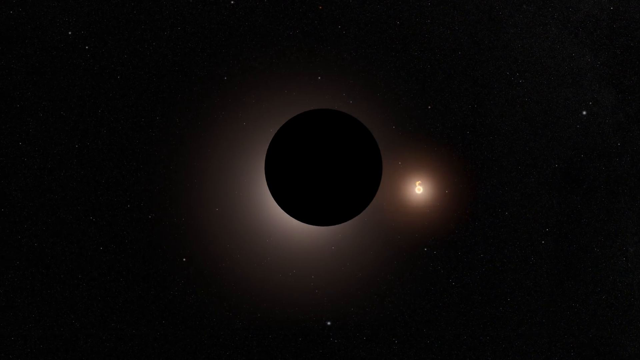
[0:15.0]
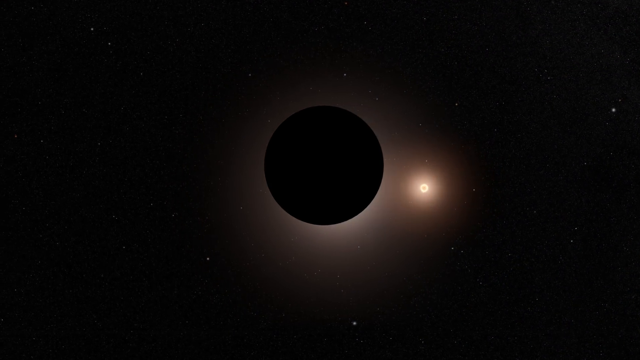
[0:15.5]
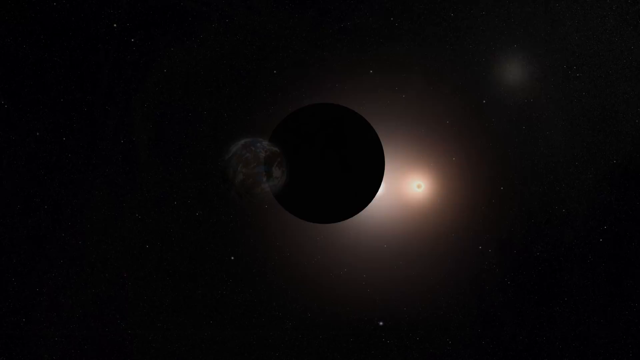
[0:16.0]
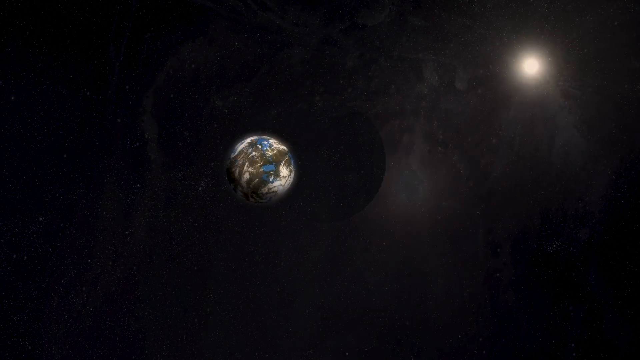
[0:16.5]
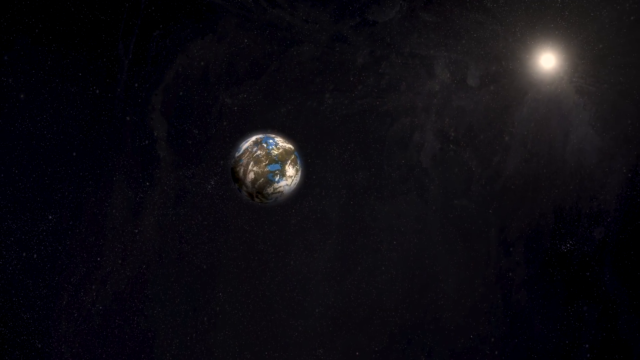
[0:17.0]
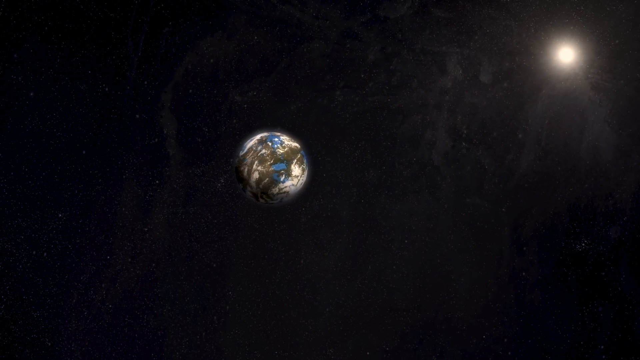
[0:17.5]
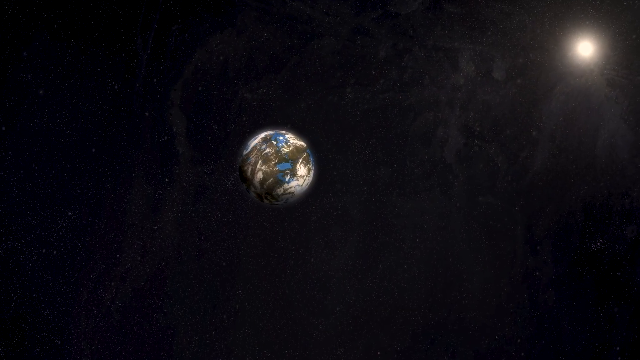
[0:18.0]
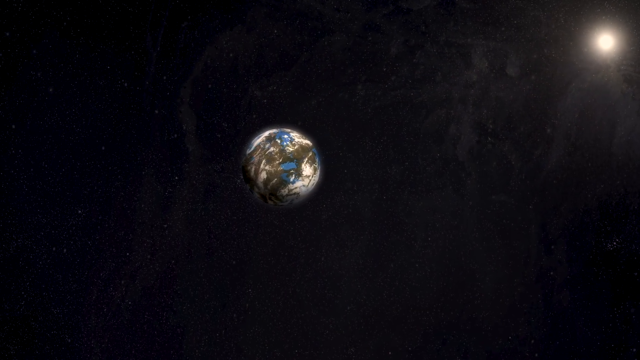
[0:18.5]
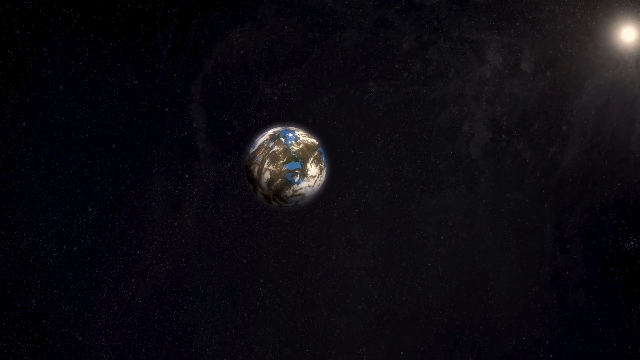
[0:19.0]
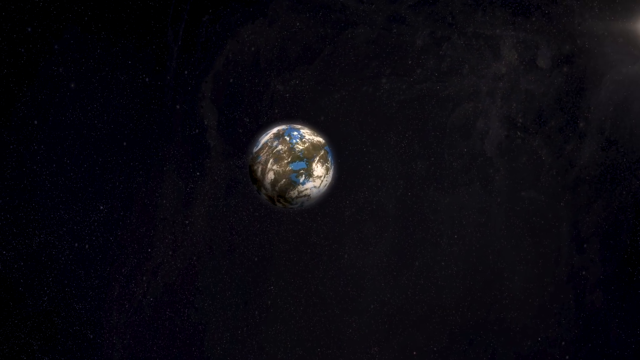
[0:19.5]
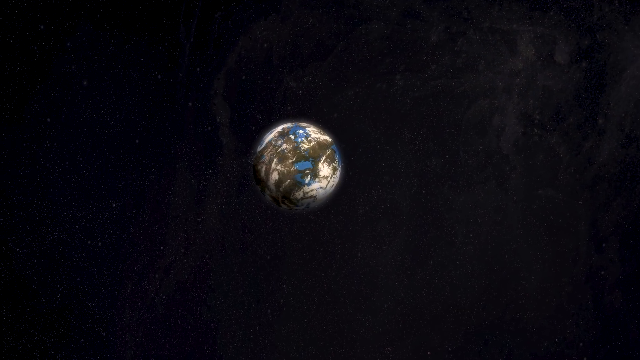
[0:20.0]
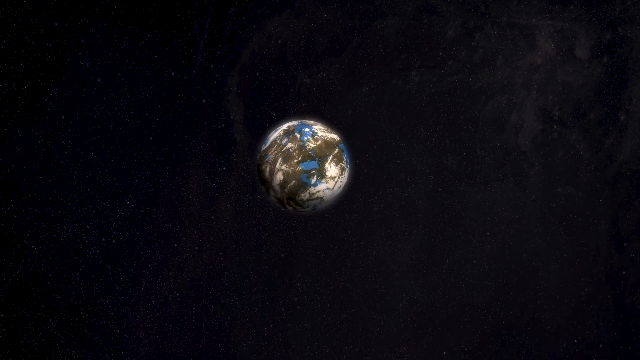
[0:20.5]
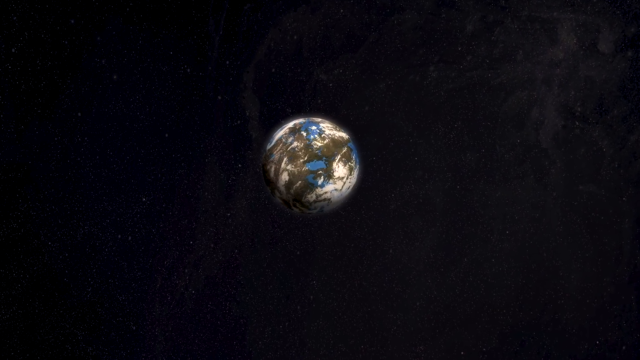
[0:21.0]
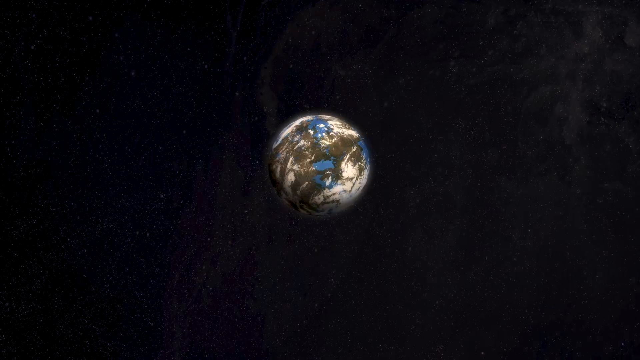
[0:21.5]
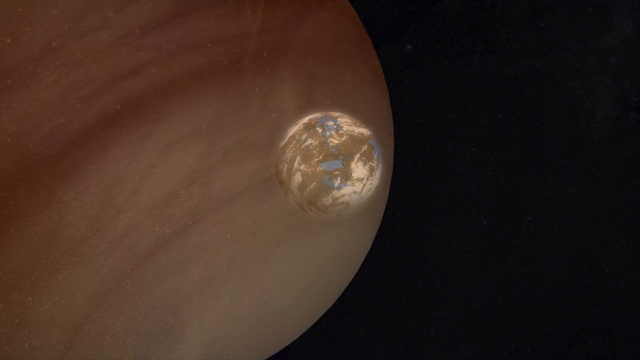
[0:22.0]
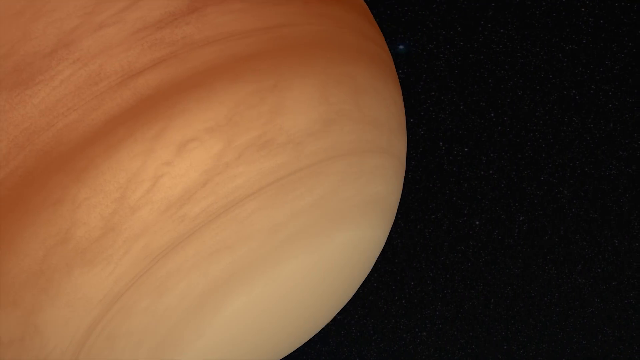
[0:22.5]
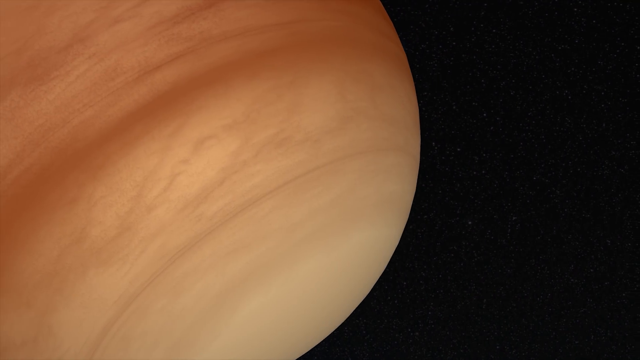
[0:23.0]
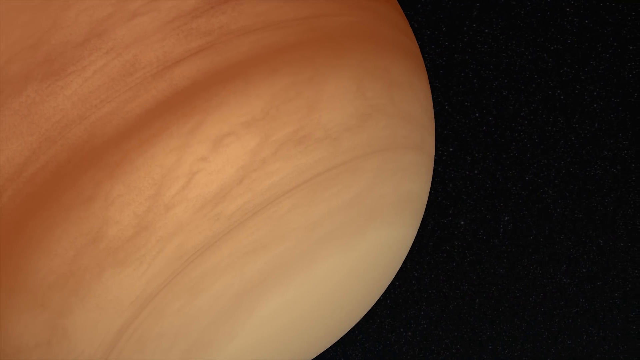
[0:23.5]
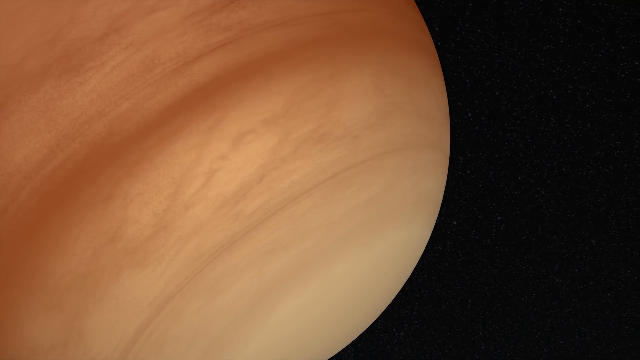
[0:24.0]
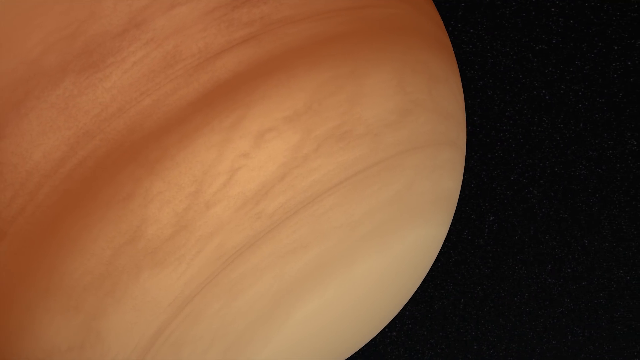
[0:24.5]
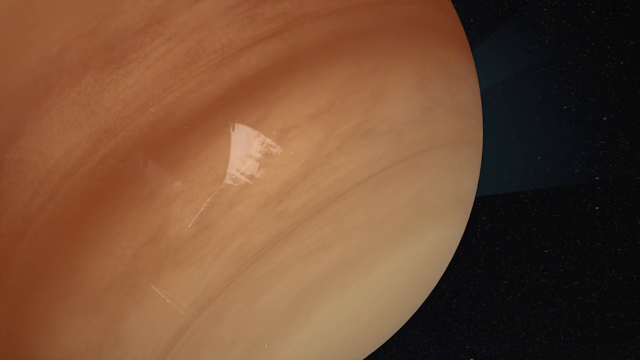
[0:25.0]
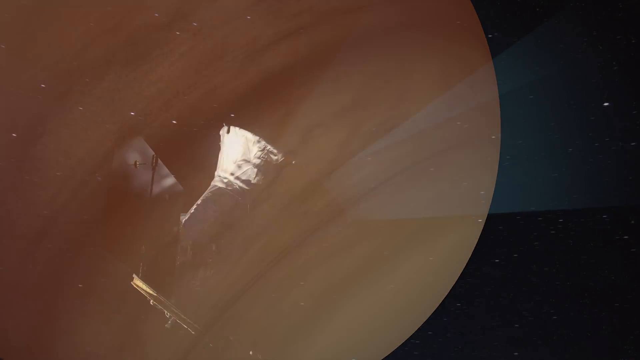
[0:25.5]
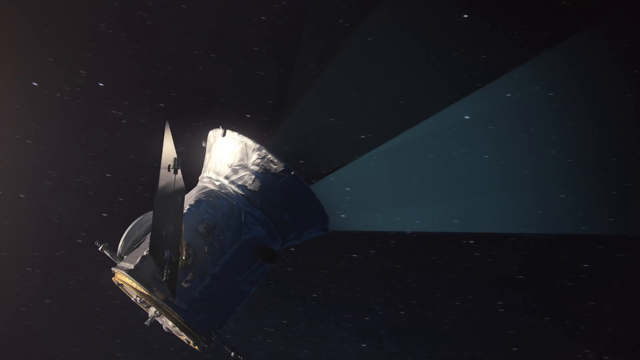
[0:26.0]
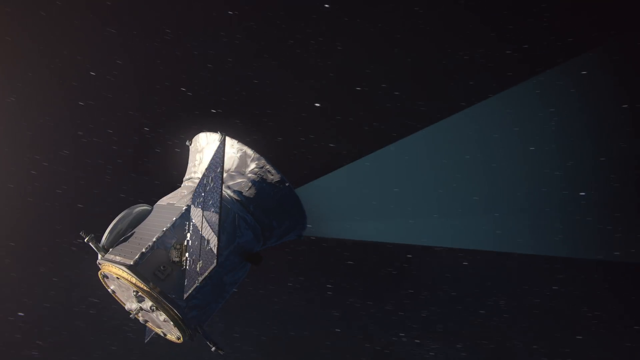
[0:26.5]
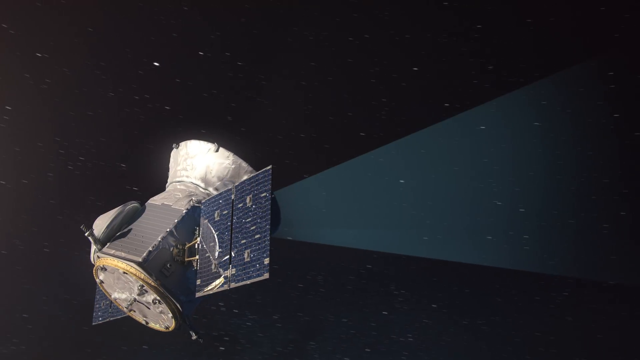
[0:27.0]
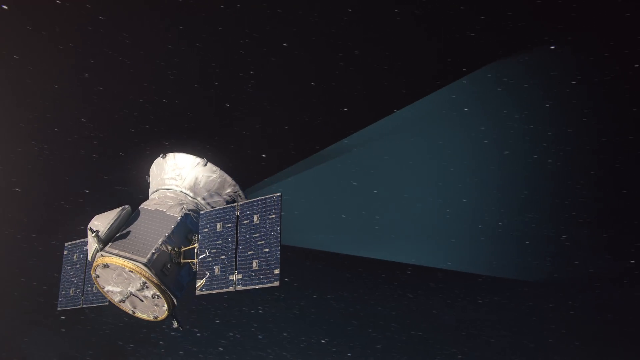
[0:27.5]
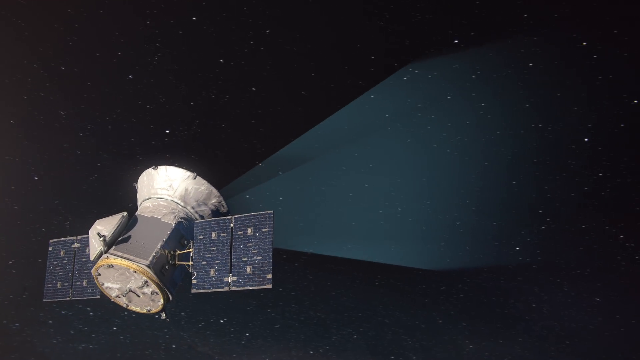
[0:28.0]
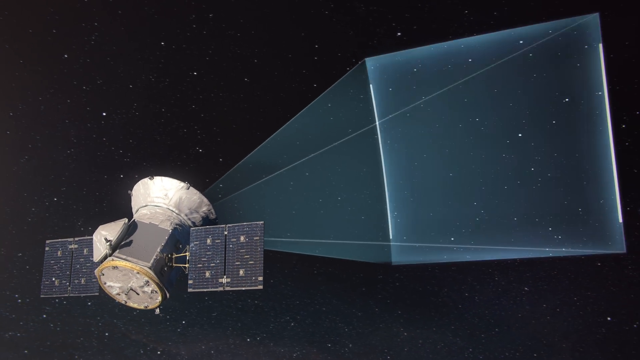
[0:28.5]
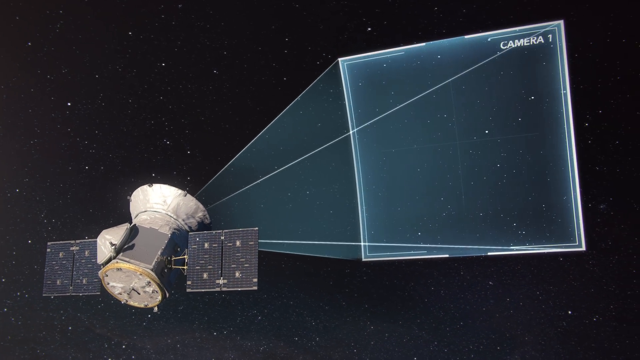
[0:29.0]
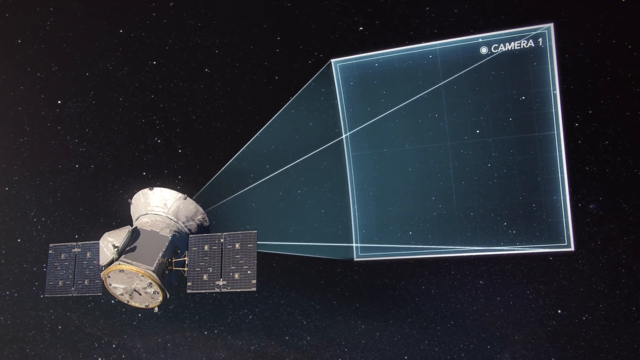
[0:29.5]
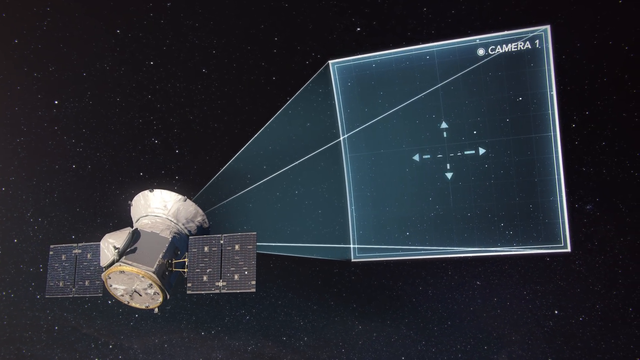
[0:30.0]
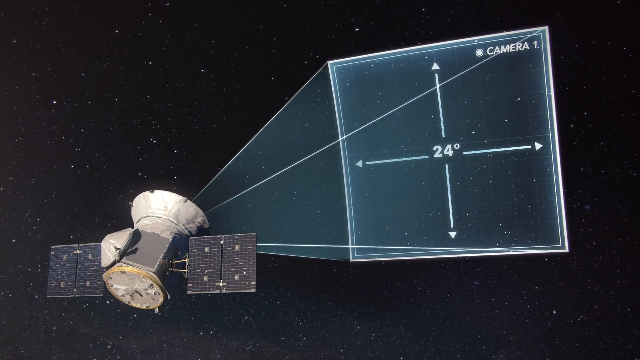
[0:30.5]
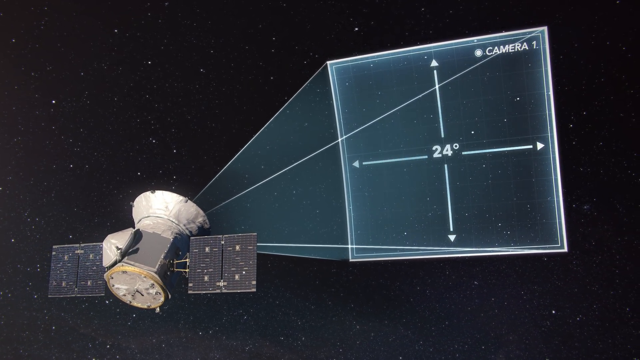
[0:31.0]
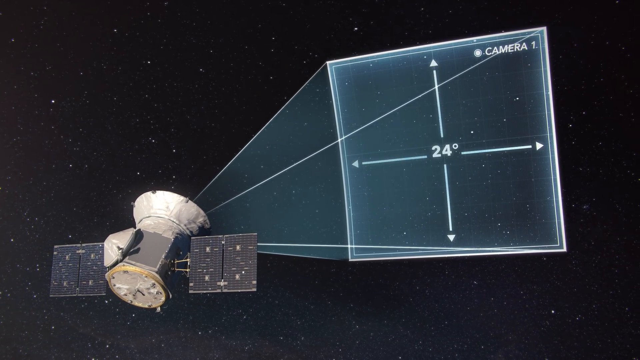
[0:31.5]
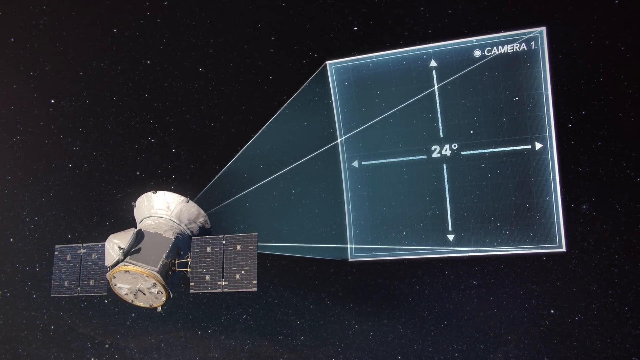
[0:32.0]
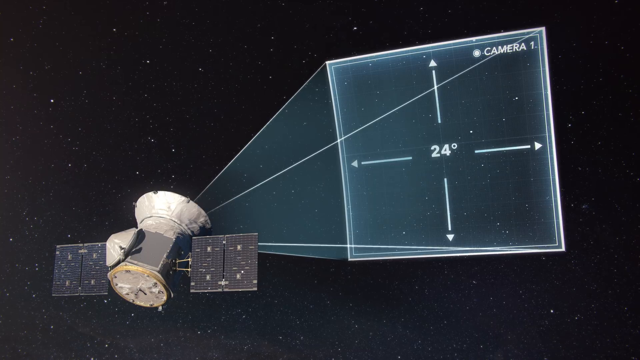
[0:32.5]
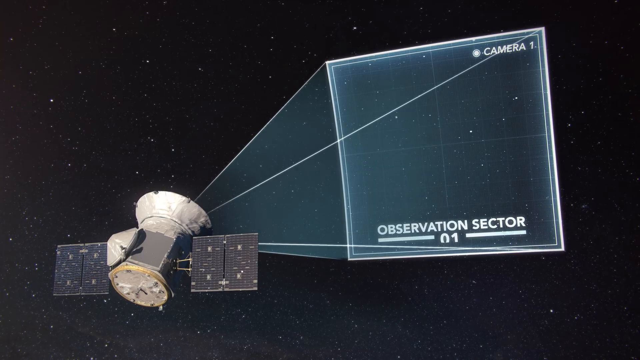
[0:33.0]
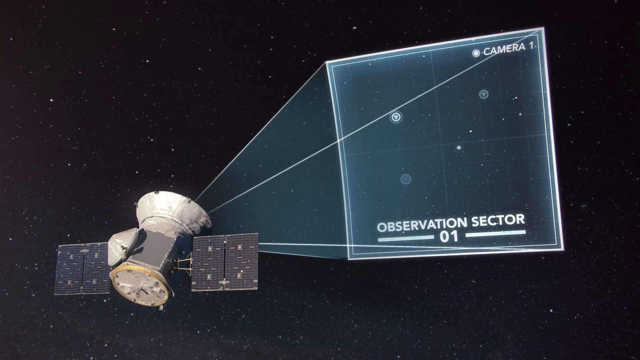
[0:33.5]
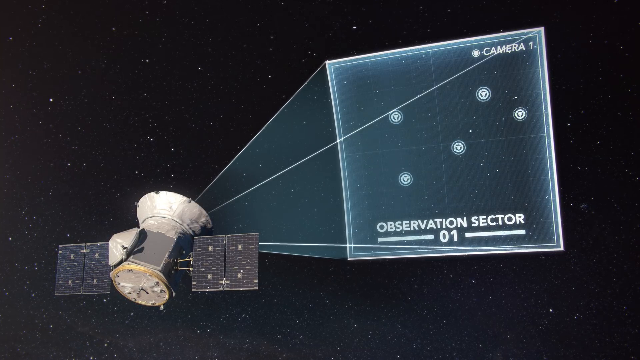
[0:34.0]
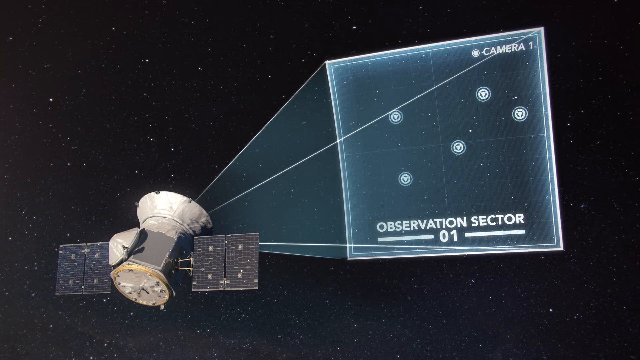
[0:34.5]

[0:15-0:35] The scene opens on what looks like a solar eclipse, with a smaller round glowing object to its right. Next, the Earth appears in the distance in the black sky, its land formations and deep blue oceans visible in the animation. The camera closes in on the Earth, giving a larger view of it. Another planet, light amber and brown in colour, then floats by, followed by a glimpse of a satellite that appears to be traveling through space and capturing various images. The satellite is shaped like a cylinder with wings, and the wings are a transparent grey structure. In front of it, the satellite projects what looks like a square beam showing an illustrated grid marked north, south, east and west, with the number 24 degrees in the center. A flash then appears on the satellite's display, followed by the words "CONSERVATION SECTOR" underlined with "01".